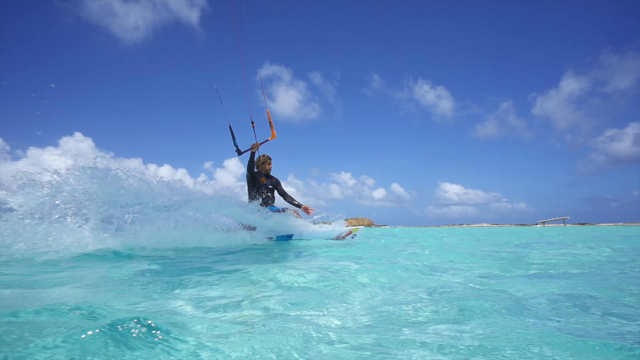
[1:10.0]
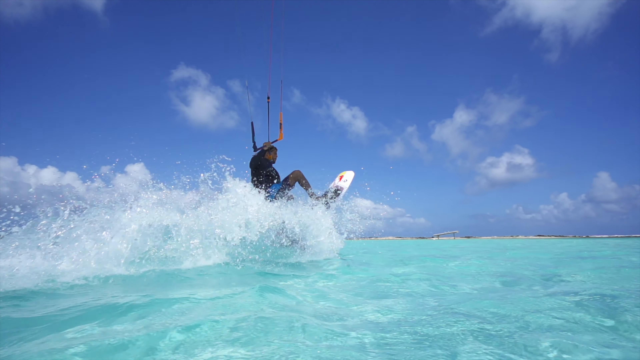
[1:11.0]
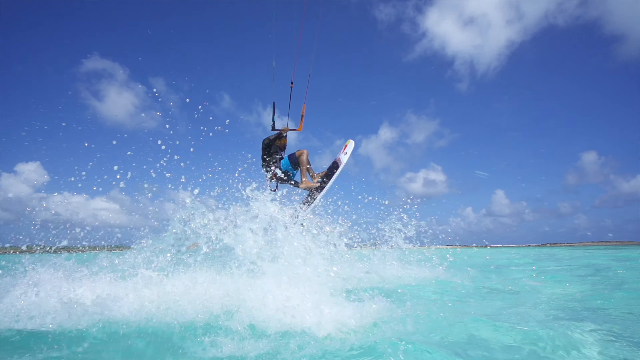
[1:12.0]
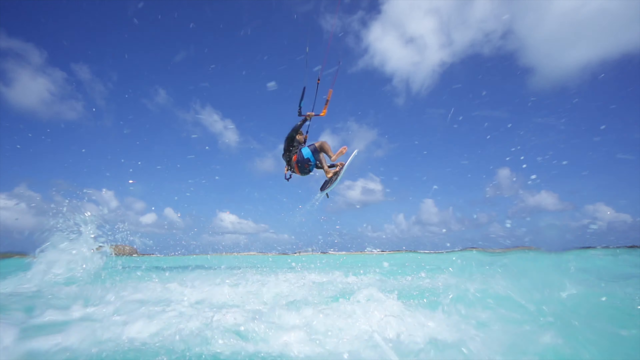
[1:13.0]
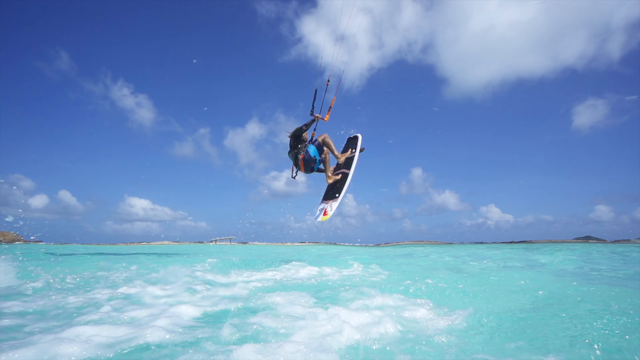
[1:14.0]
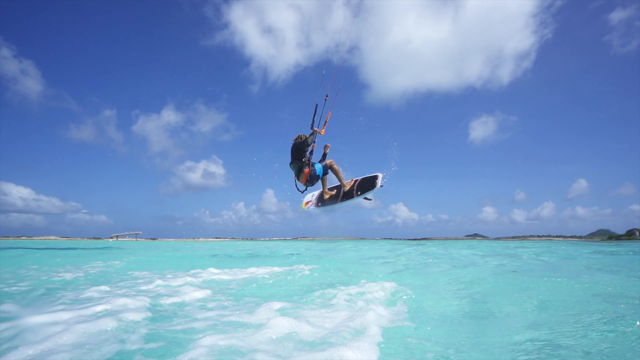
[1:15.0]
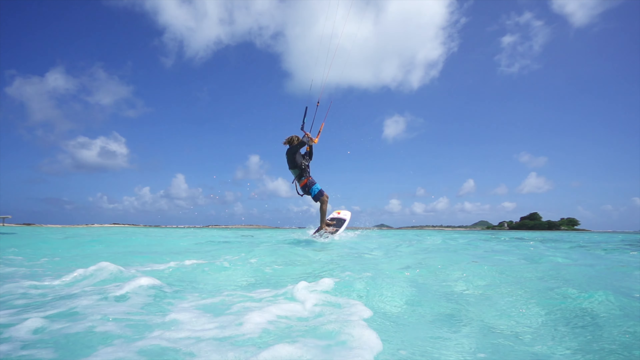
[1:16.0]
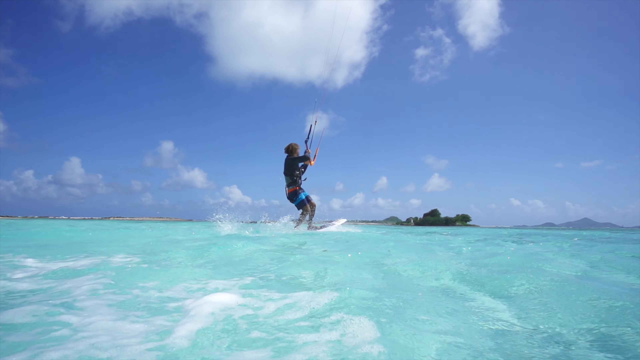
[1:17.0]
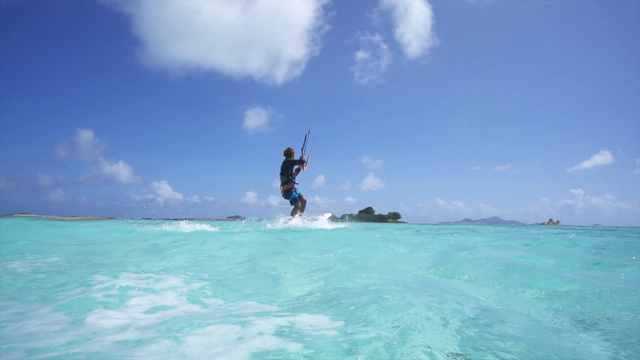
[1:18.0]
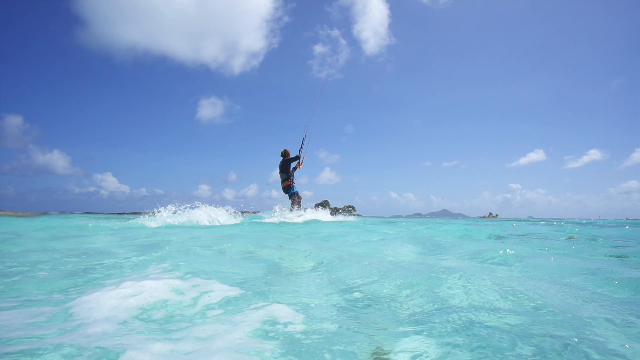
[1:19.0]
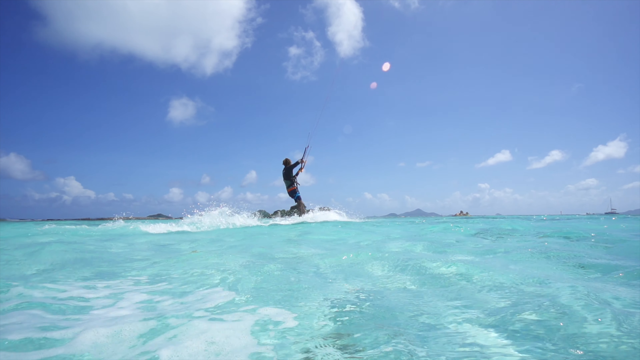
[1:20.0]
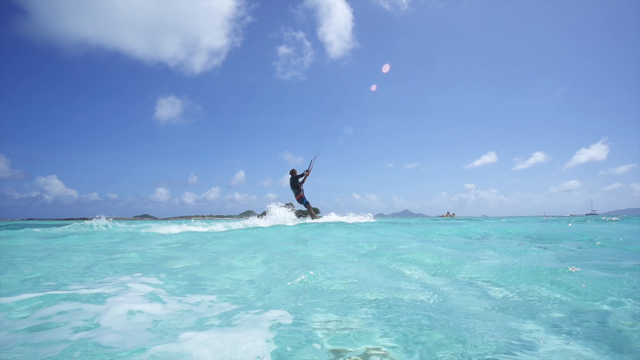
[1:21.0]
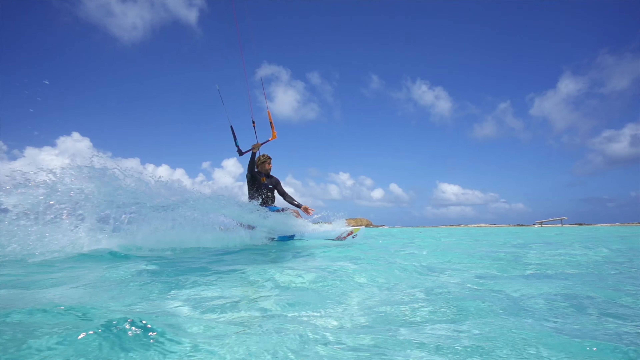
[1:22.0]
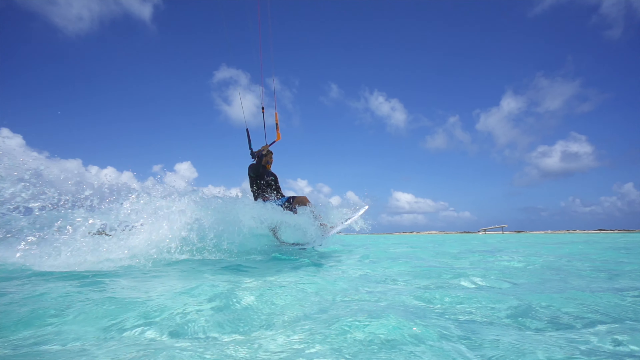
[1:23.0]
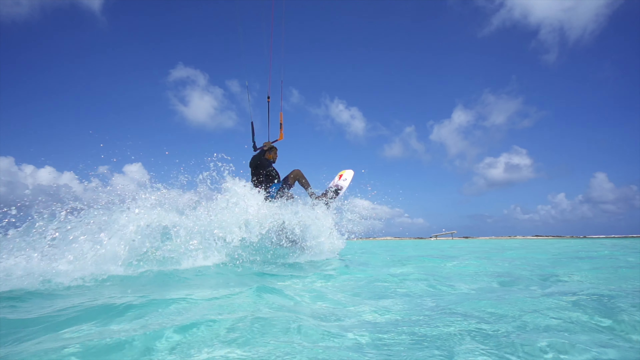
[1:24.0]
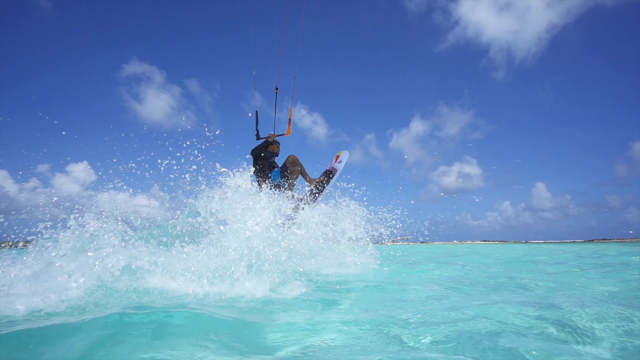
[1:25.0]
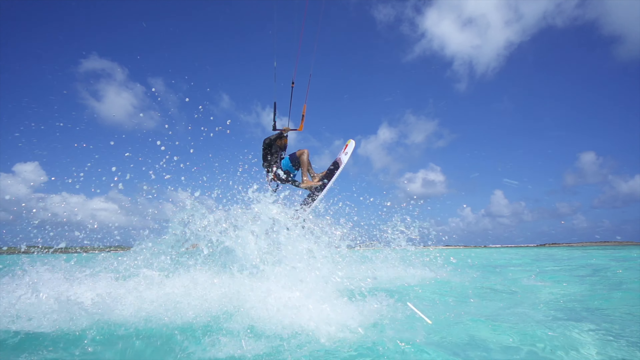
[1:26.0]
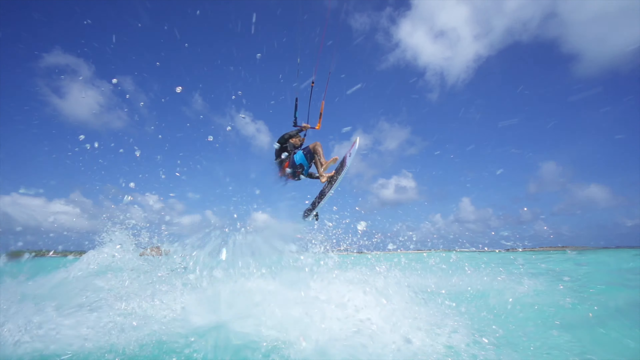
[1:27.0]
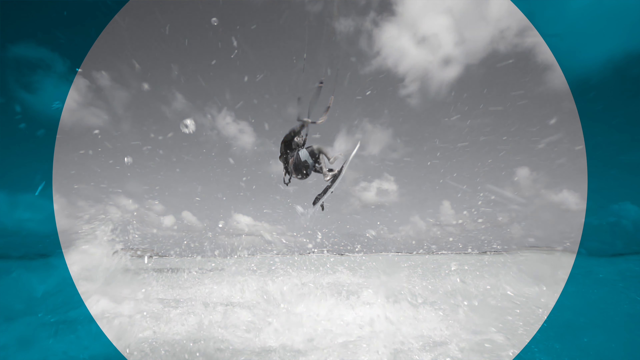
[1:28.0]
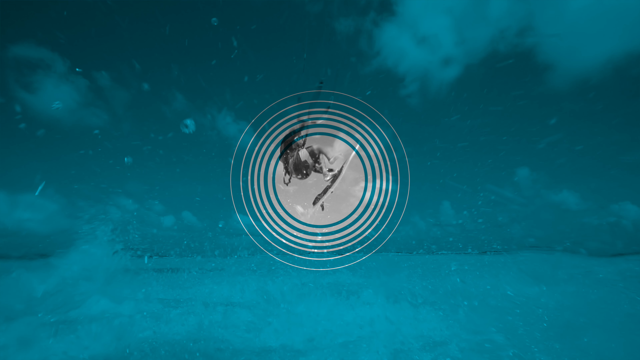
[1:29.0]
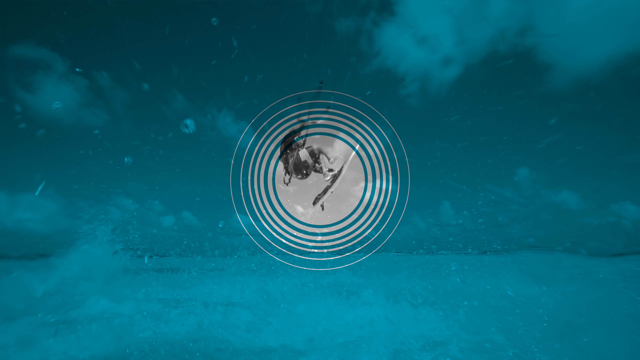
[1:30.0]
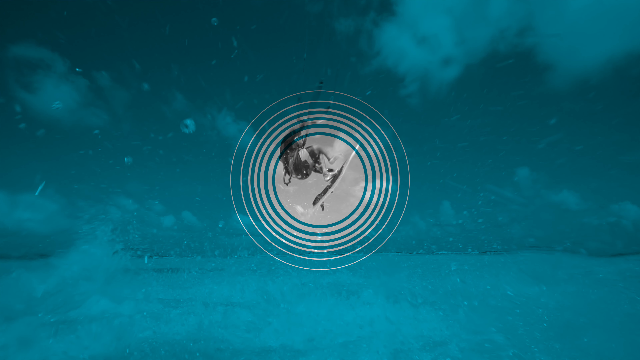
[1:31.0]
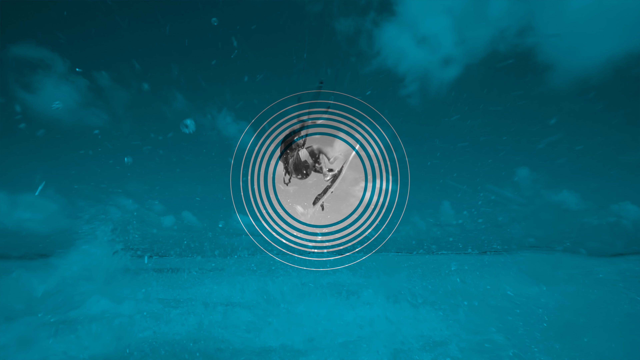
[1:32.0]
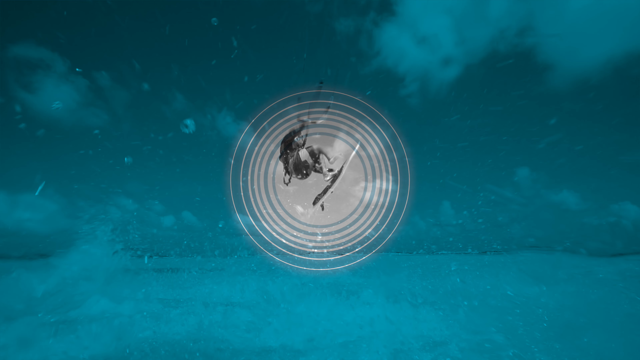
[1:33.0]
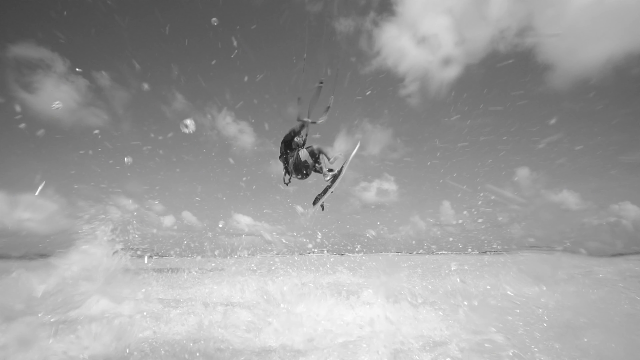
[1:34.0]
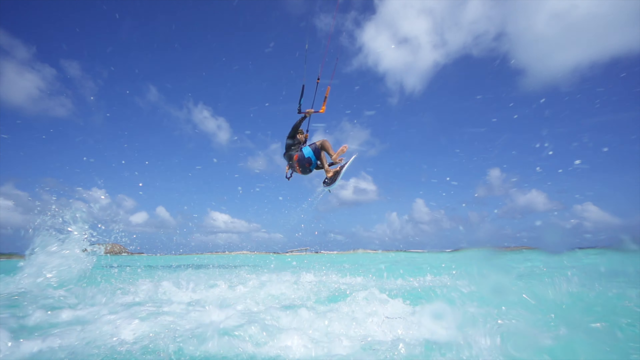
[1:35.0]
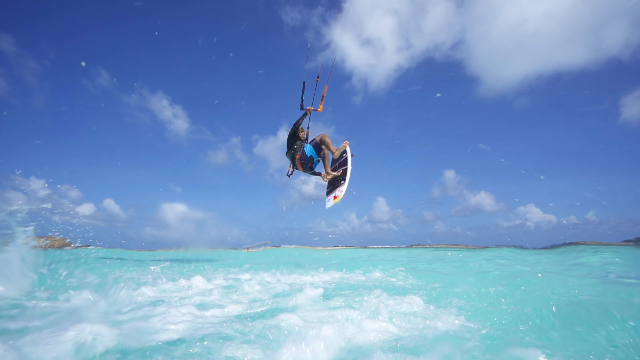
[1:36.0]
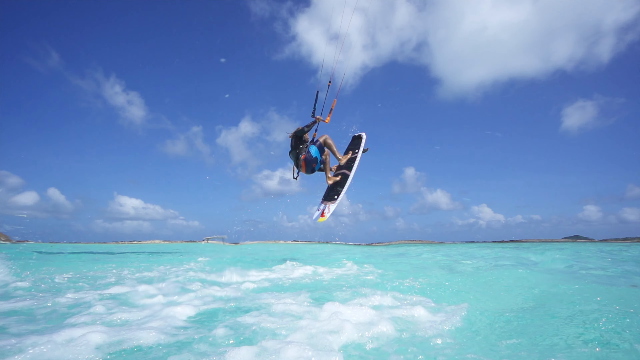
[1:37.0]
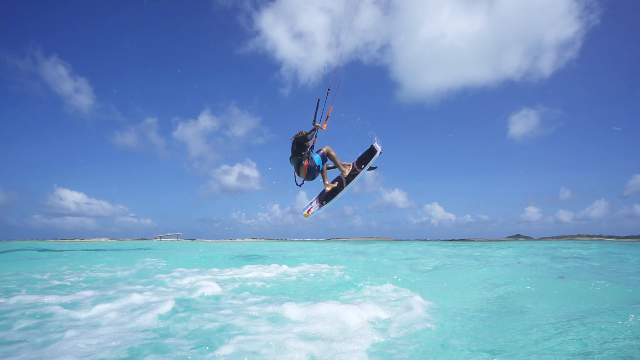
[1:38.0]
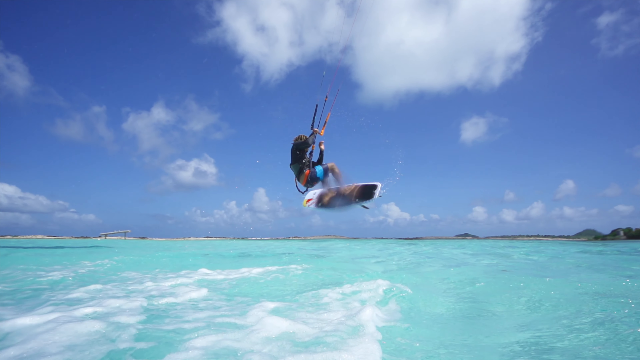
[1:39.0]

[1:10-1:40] The water is very bluish-green, and the sky is blue with puffy white clouds. The man is on the board with lots of waves coming up behind him. The board goes completely into the air and does a complete 360-degree turn, then he puts his feet back on it as he lands in the water. He has one hand on the board and one hand on the bar attached to the parachute. Again a bluish-green screen comes over the scene, with big white bullseye-type circles, then a smaller circle inside, continuing until the focus of the bullseye is on the board. It stays focused for several seconds, then zooms back out to color action video of the man turning on the board and landing back in the water.